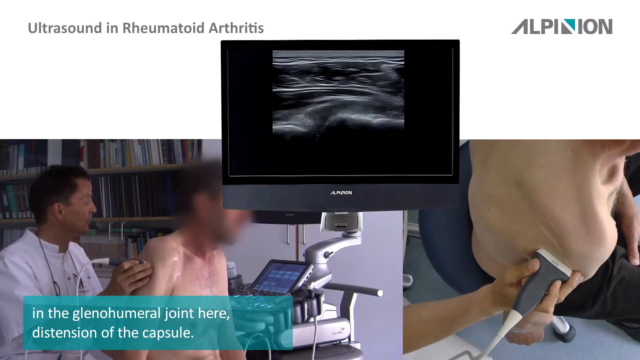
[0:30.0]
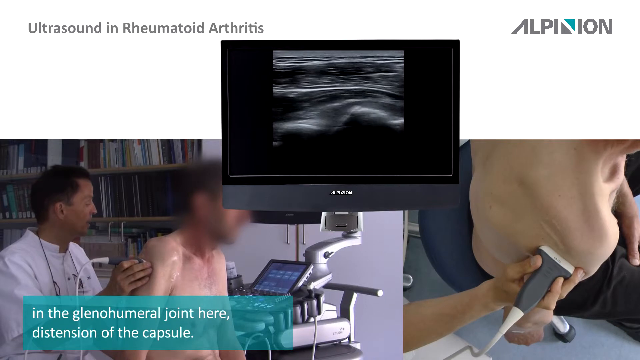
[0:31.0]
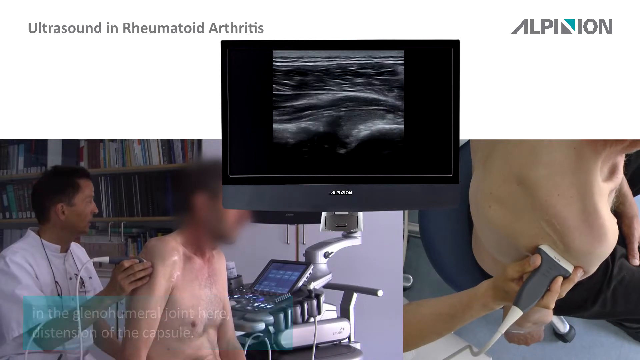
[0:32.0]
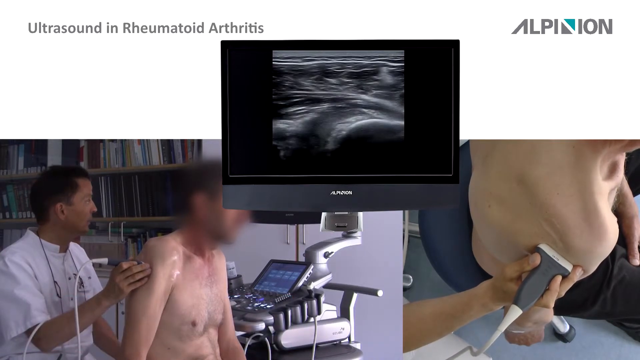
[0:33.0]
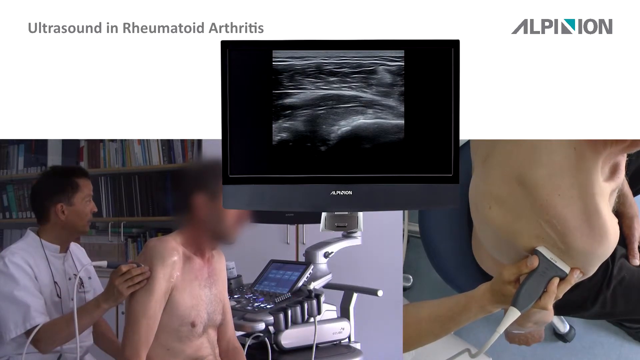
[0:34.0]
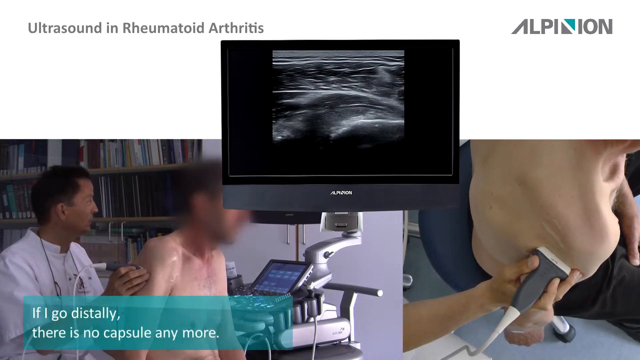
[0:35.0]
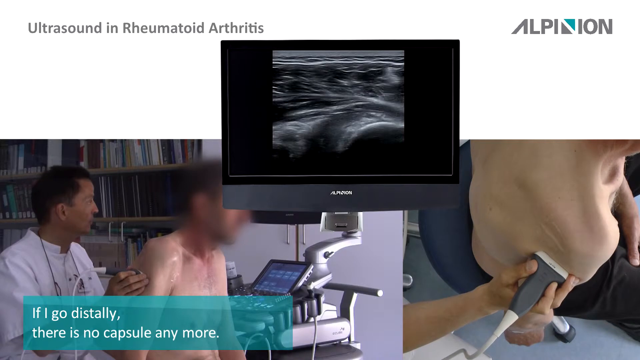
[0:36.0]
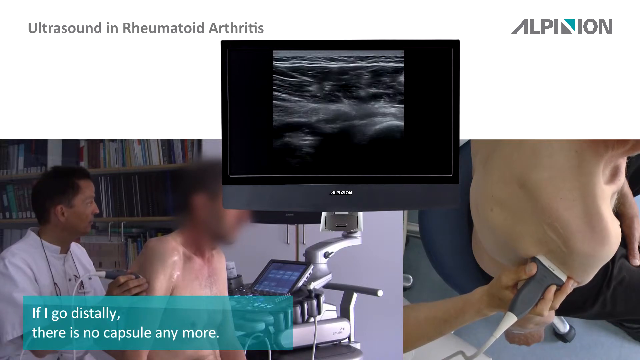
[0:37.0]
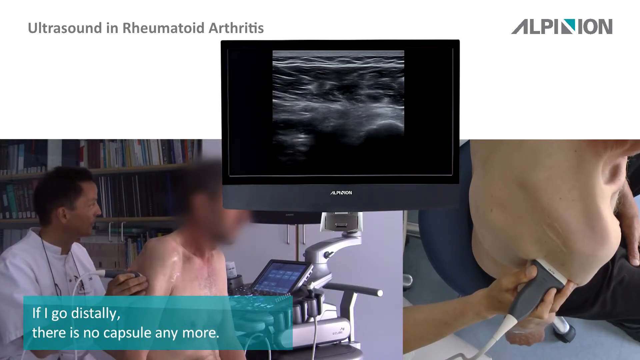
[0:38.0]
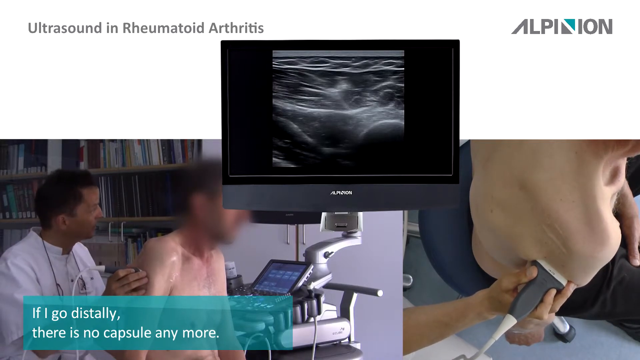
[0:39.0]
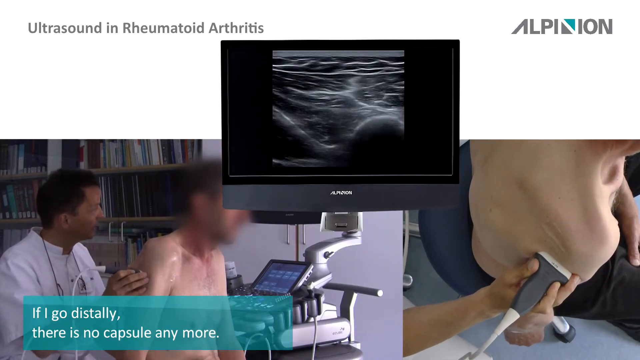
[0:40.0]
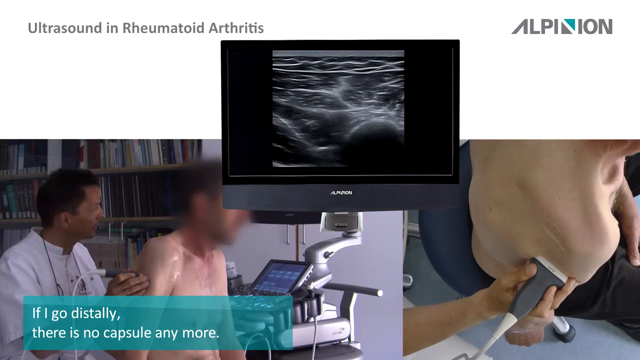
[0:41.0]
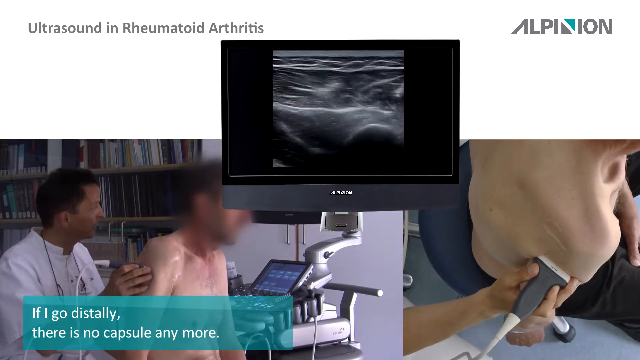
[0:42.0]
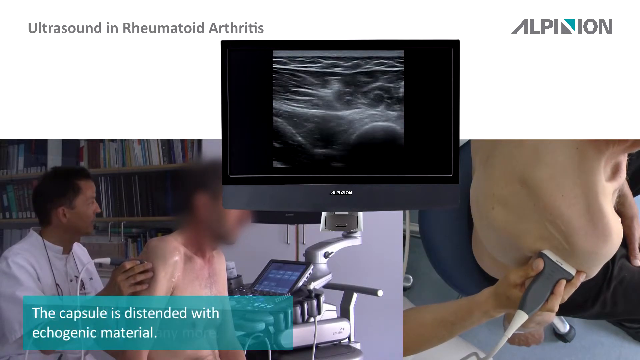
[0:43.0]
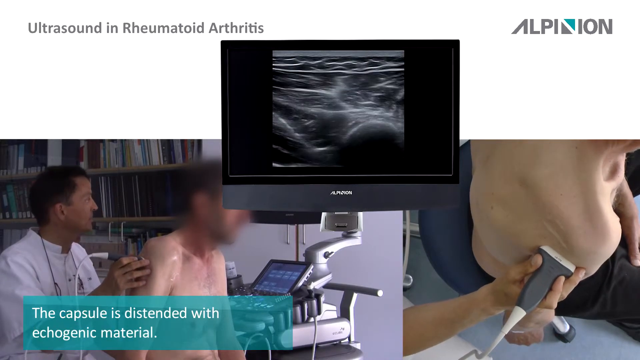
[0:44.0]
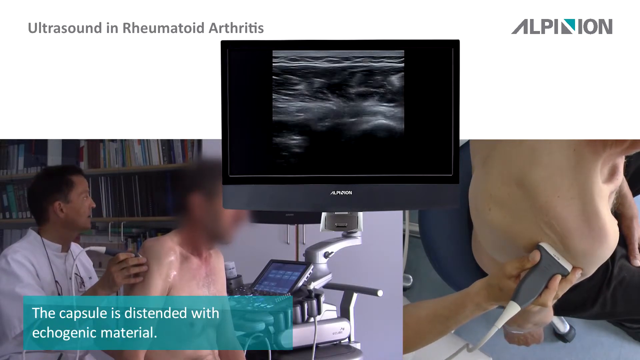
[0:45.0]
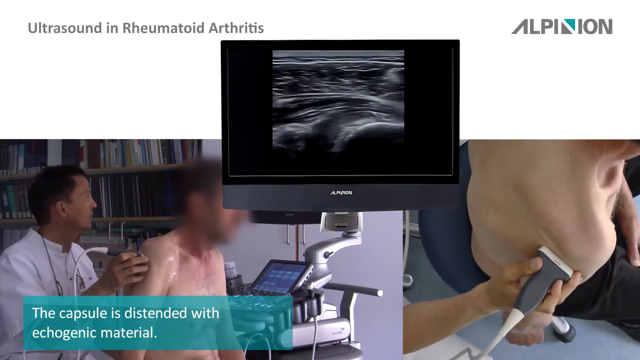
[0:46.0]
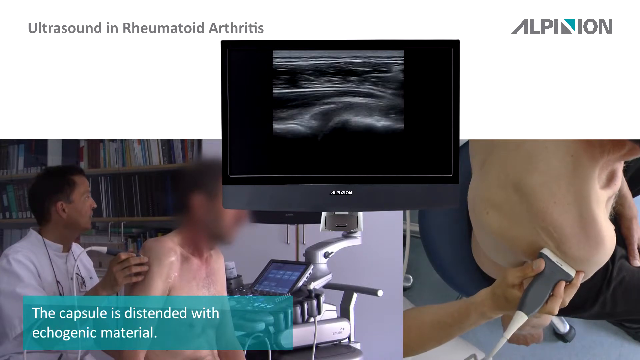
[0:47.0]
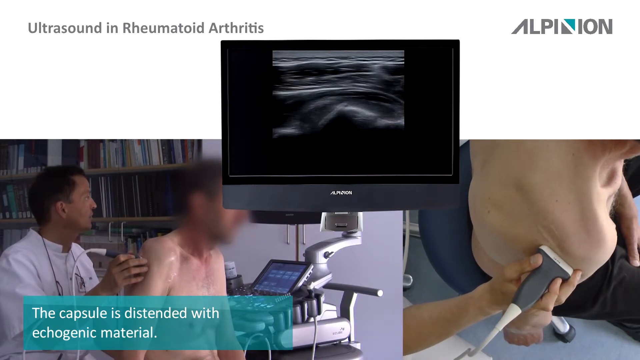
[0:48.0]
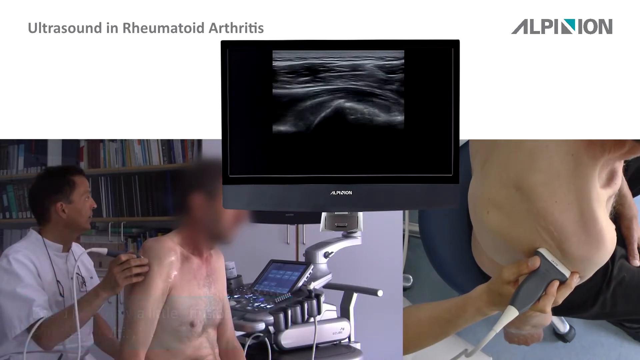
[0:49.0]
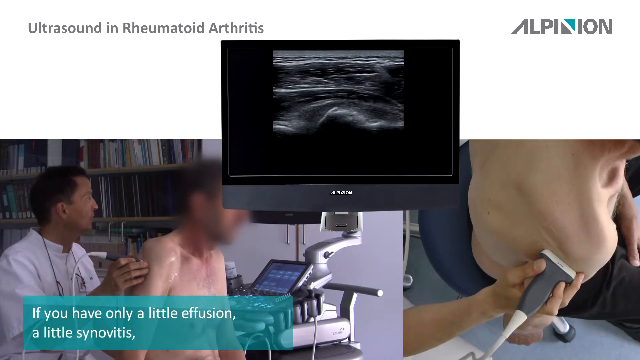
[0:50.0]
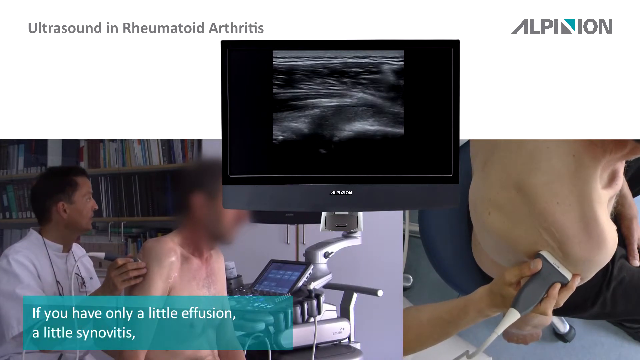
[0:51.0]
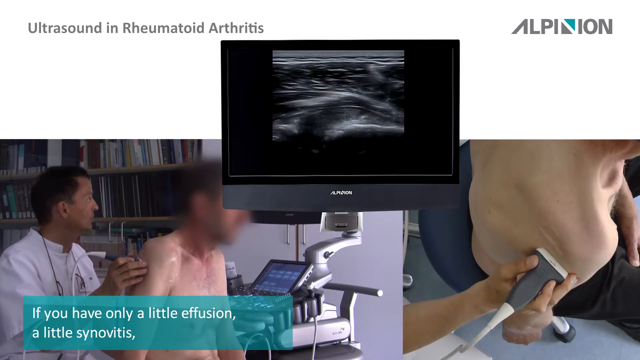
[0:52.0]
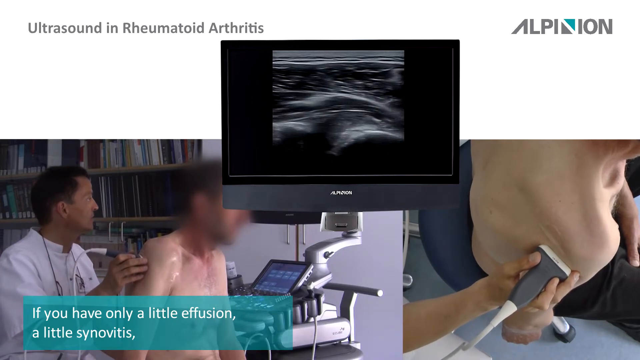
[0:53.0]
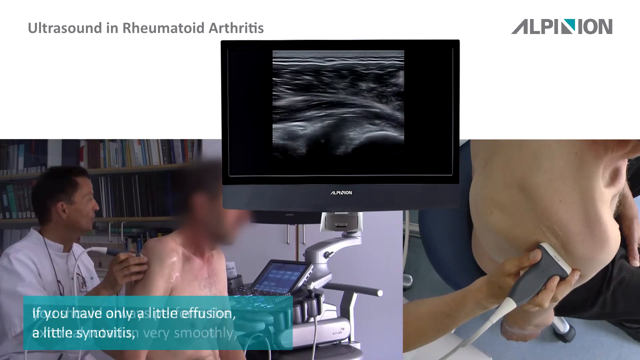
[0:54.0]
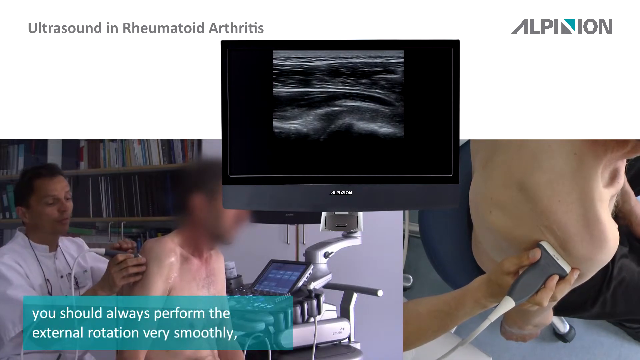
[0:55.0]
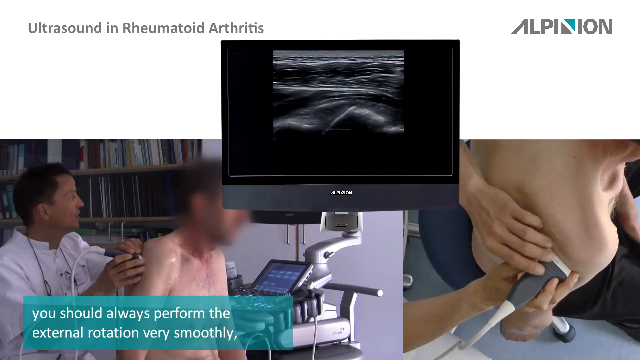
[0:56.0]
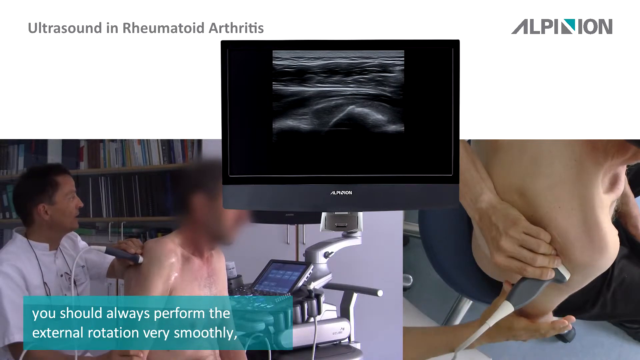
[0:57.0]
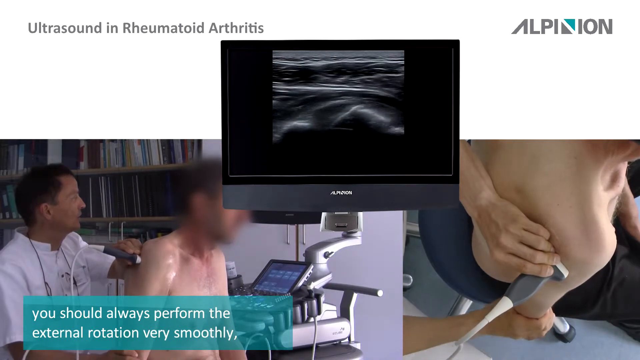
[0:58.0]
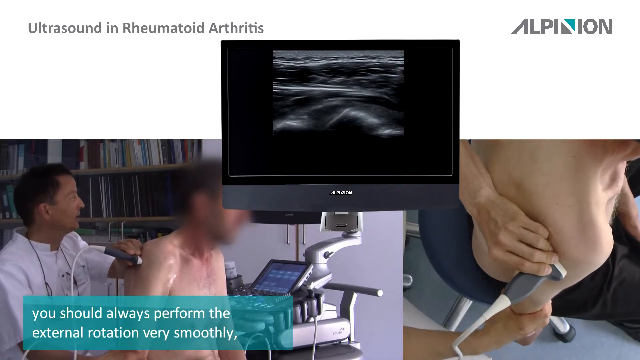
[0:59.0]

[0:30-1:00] On-screen text continues, including "if you have only a little effusion and a little synovitis. You should always perform the external rotation very smoothly." This text is displayed on the left-hand side of the screen while the doctor demonstrates how to perform the ultrasound. The screen seems to be divided into three areas: on the left, the doctor performing the ultrasound on the man; in the middle, the ultrasound image; and on the right, the man's back and the materials the doctor is using. The doctor seems to be moving the ultrasound material quite slowly and carefully on the patient.